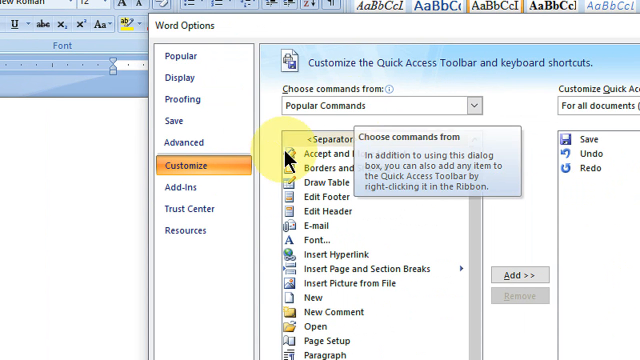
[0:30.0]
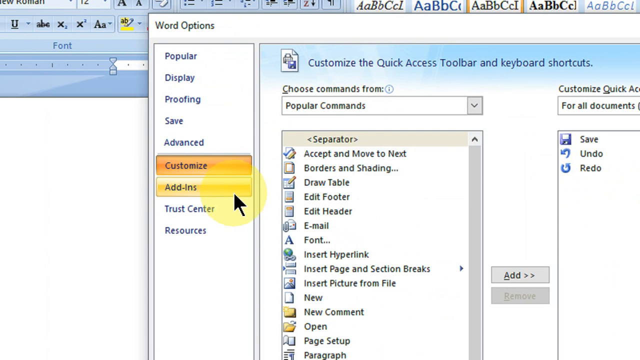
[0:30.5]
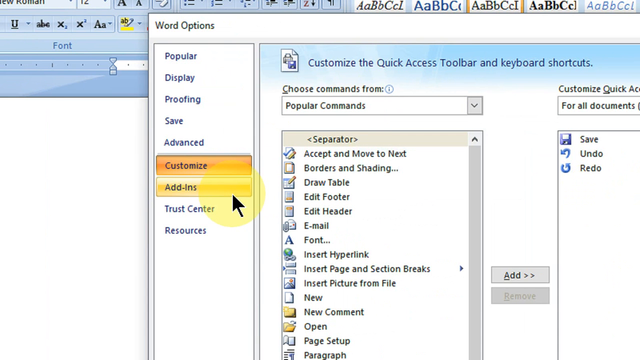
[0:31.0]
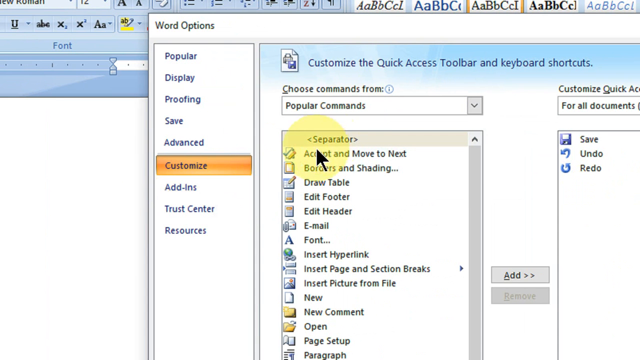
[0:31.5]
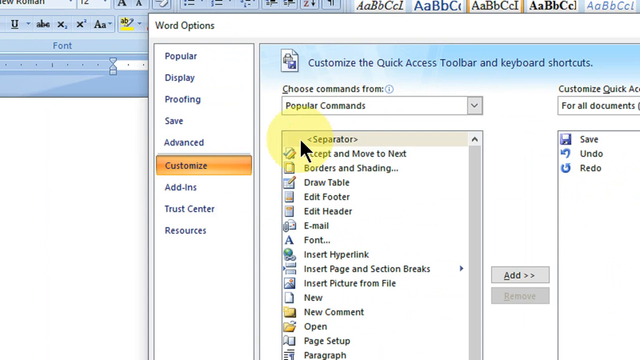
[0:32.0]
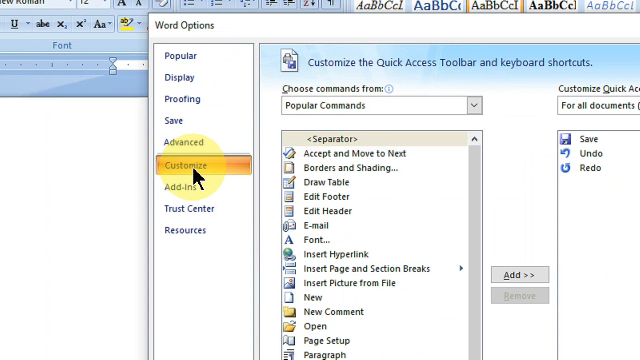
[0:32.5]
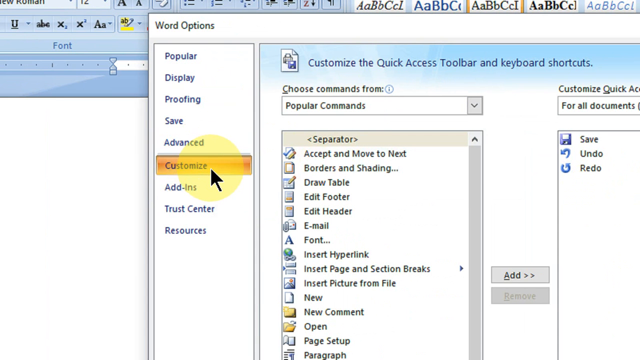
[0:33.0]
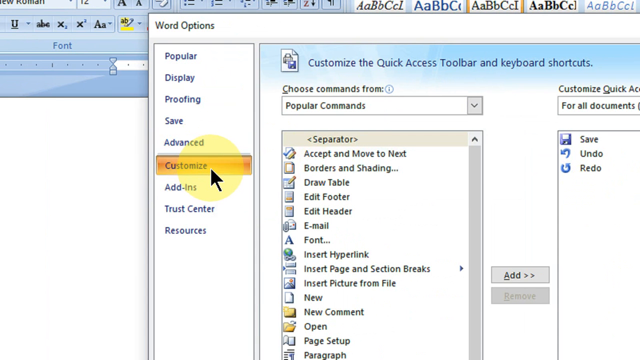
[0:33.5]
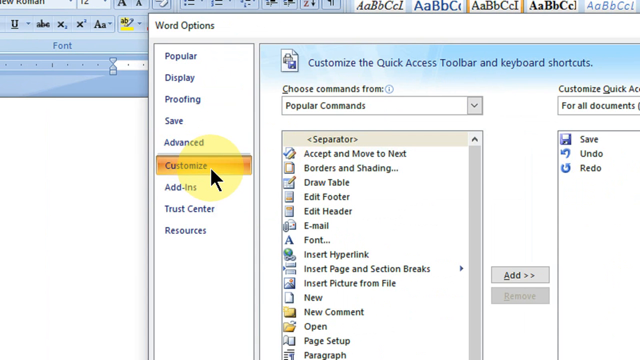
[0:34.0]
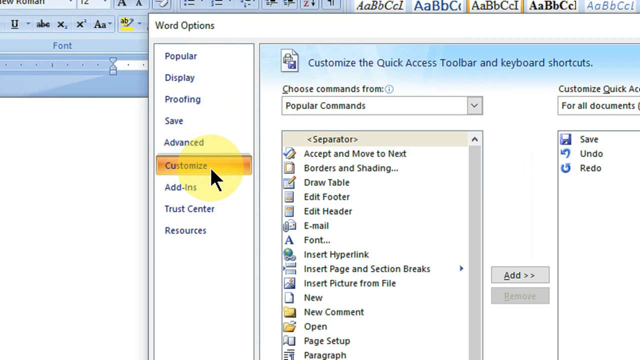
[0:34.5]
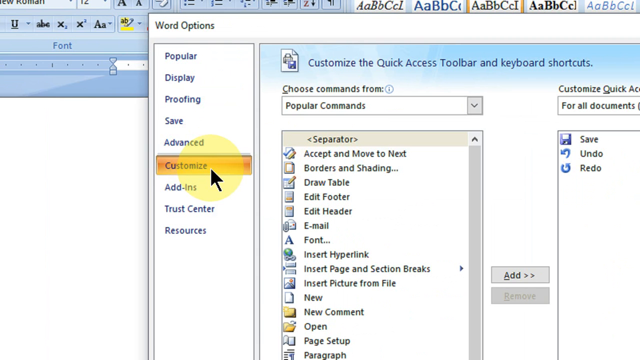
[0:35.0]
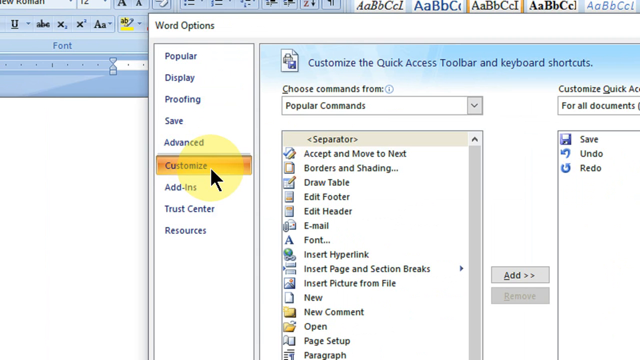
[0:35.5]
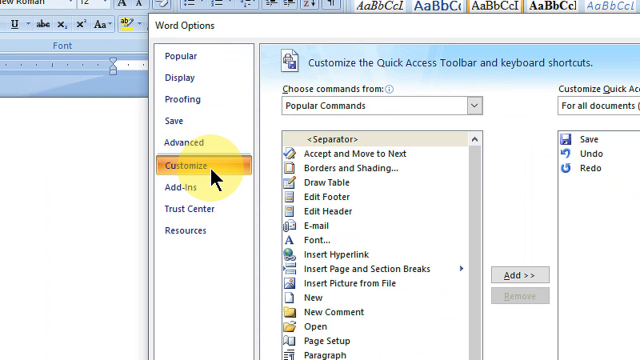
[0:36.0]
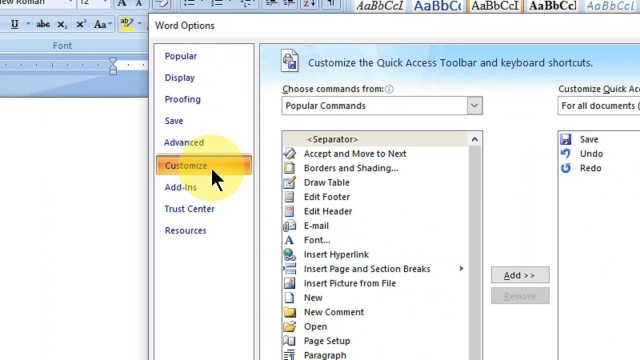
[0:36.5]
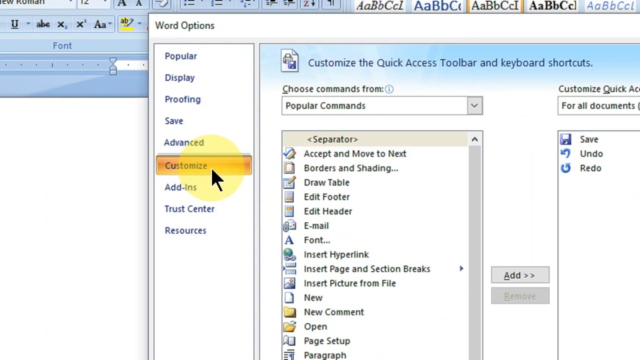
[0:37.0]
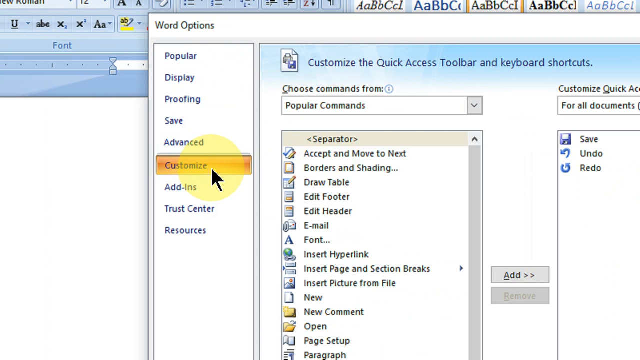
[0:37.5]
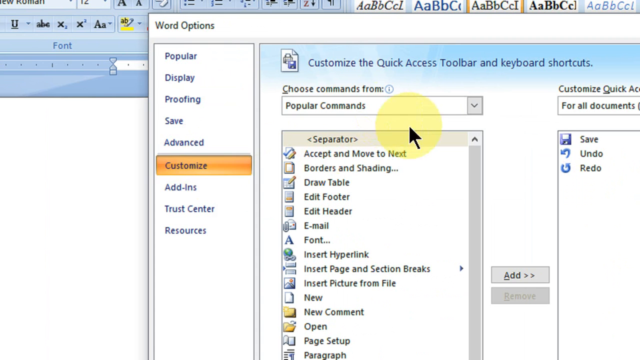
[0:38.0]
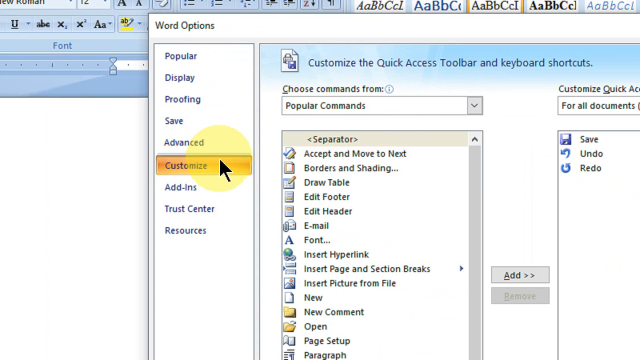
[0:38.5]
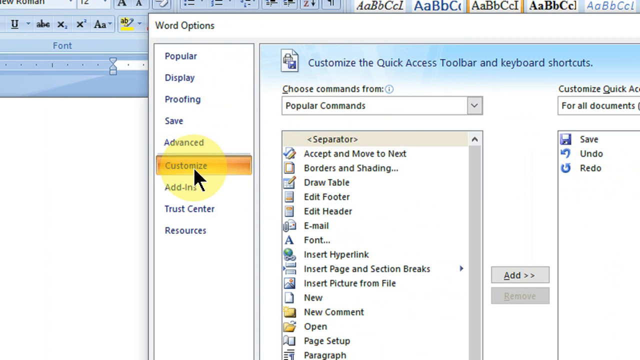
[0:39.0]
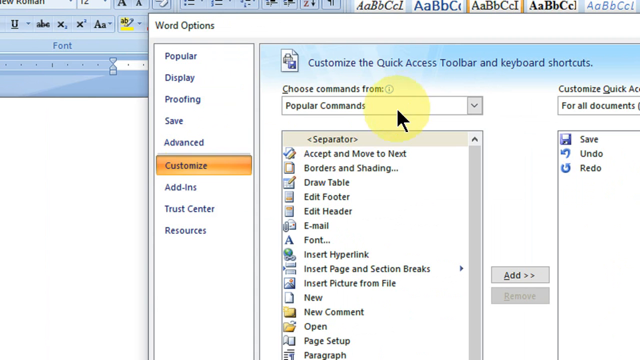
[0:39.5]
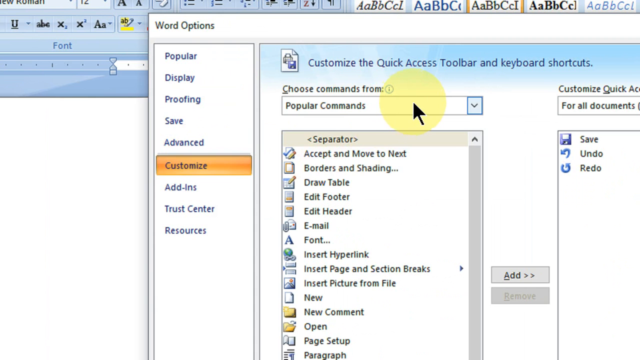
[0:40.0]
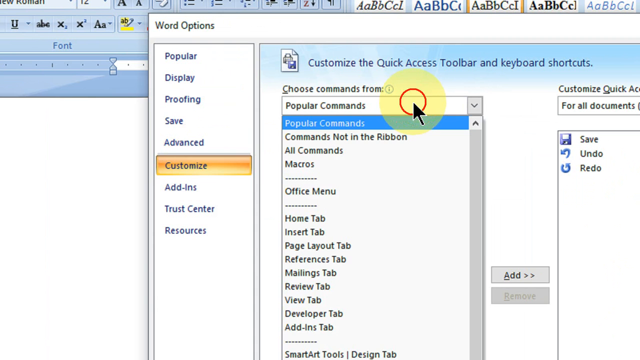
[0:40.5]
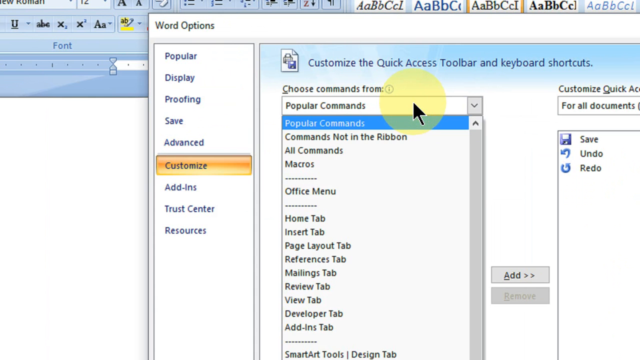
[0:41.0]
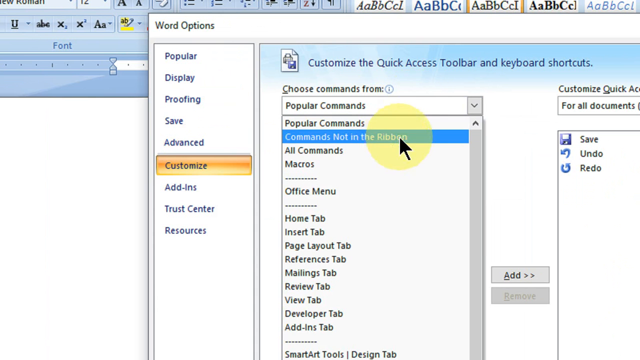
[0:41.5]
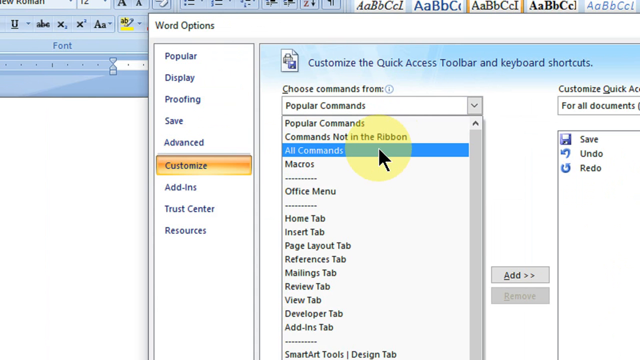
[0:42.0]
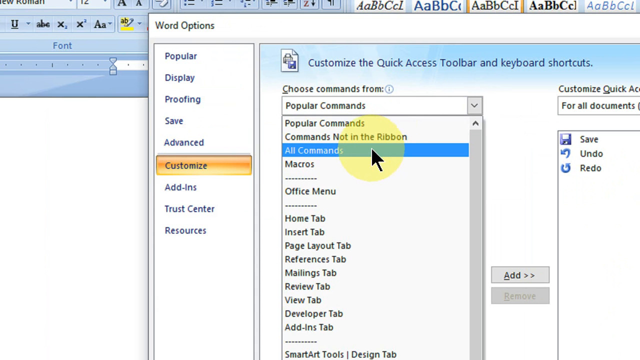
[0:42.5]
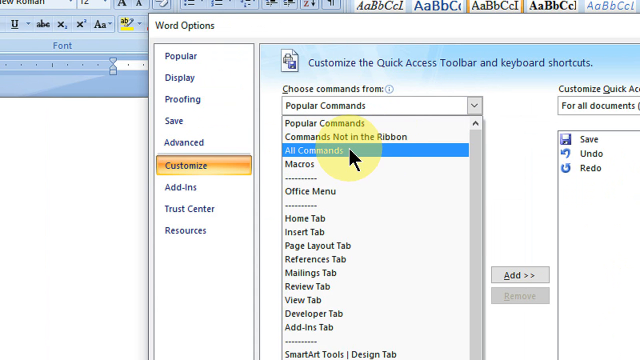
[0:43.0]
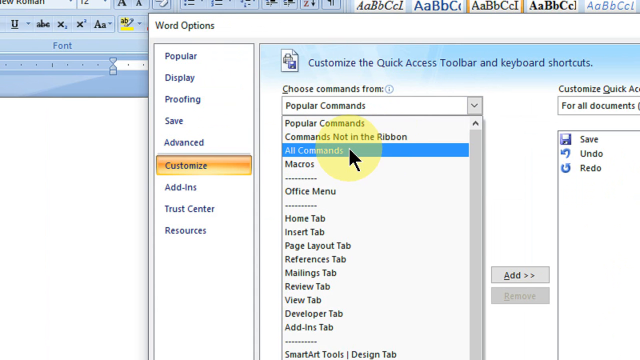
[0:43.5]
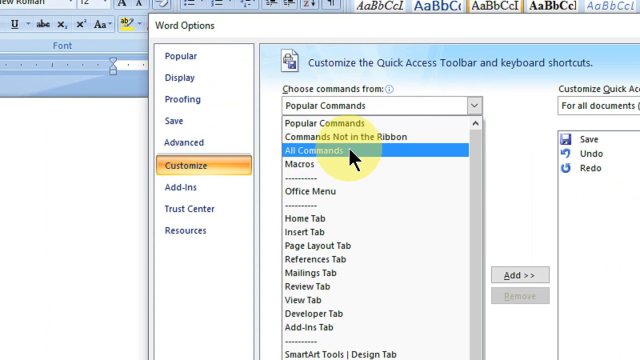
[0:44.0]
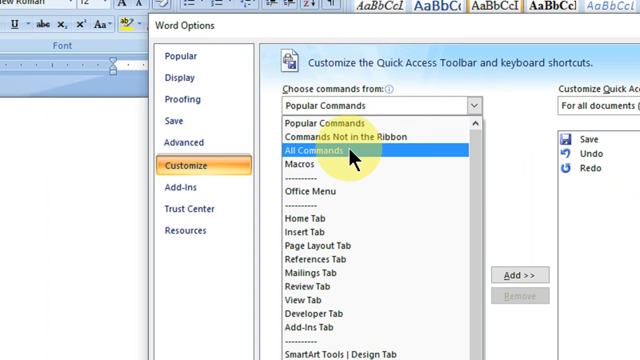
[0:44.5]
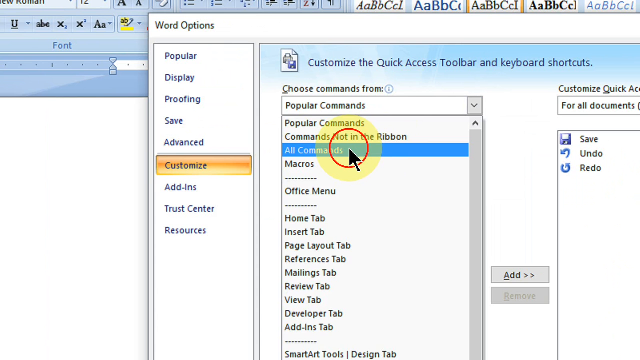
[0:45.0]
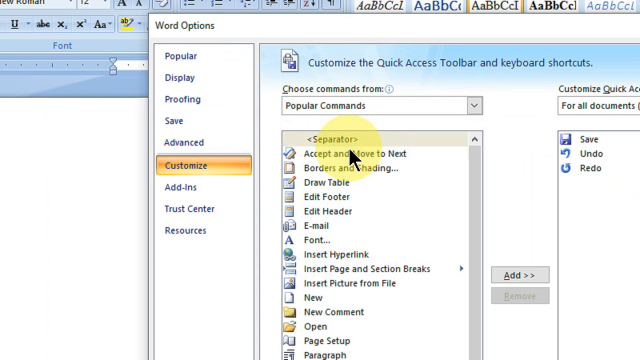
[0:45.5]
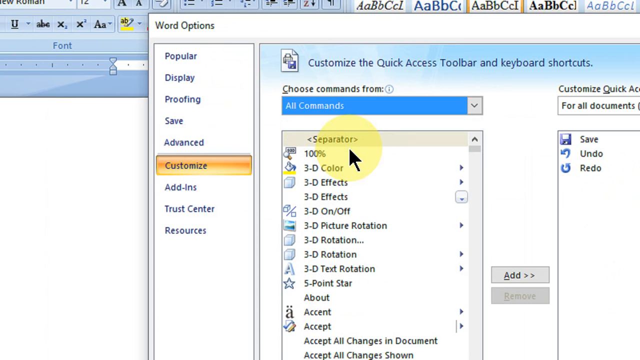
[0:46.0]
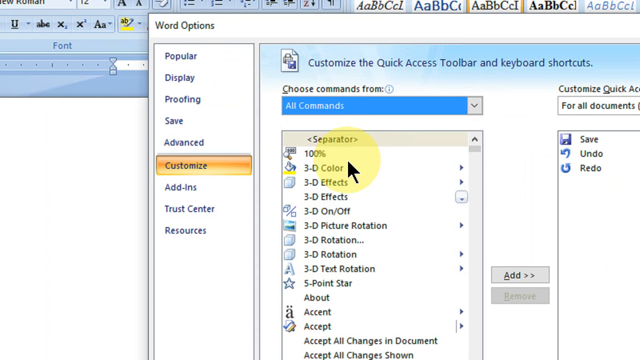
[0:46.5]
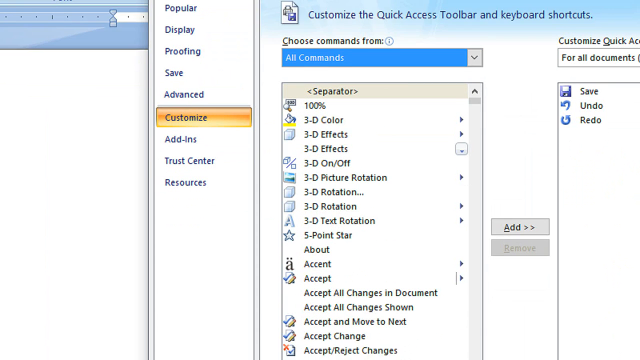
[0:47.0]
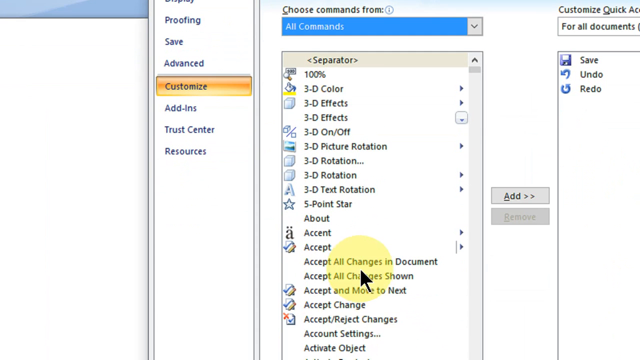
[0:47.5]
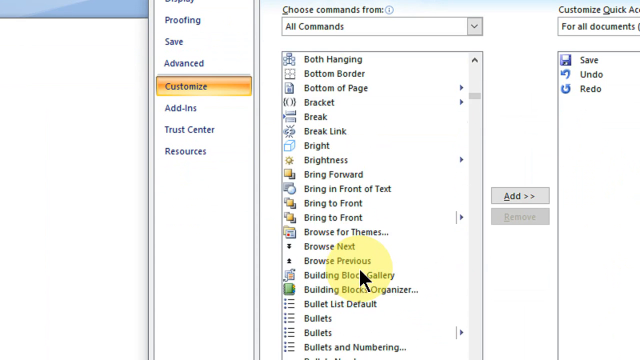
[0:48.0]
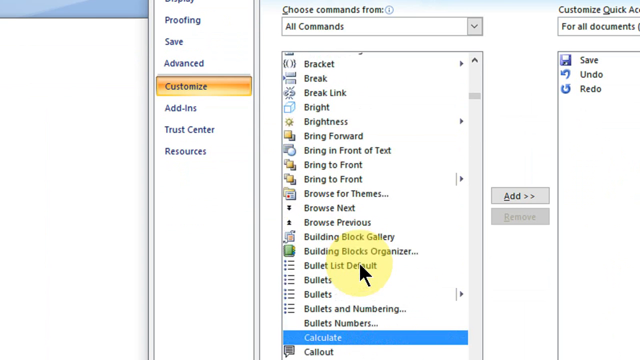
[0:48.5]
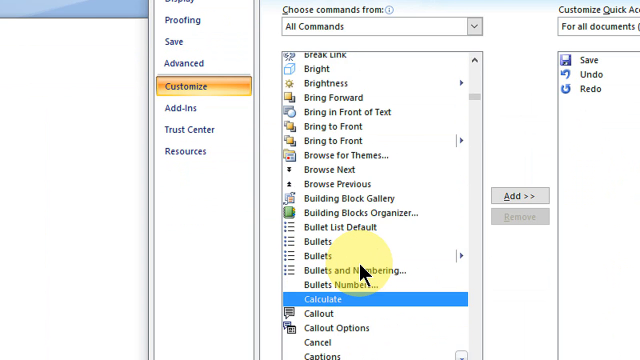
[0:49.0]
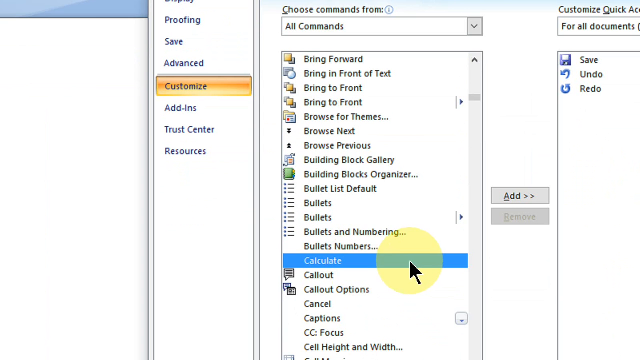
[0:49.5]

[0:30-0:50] In the Word Options dialog box, the user clicks the Popular Commands drop-down box and changes it to All Commands. They scroll down the list, highlighting each option, until they reach Calculate. Other options in the All Commands list include "100%, 3D color, 3D effects, 3D on/off, five point star, about, accent, accept, accept all changes in document, accept all changes shown, accept a move to next, accept, change, accept/reject changes, brightness, bring forward, bring in front of text, bring to front, bring to front, browse for themes, browse next, browse previous, building block gallery, organizer, bullet list, default, bullets, bullets and numbering, bullets number, calculate, call out and call out options." The left box shows headings besides Customize: Popular, Display, Proofing, Save, Advanced, Add-ins, Trust Centre and Resources. In the middle there is an Add button for moving items from the Choose Commands From list to a table on the right labeled Customize Quick Access, which currently contains Save, Undo and Redo.